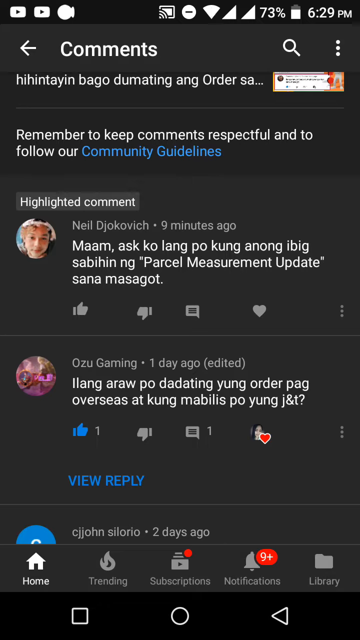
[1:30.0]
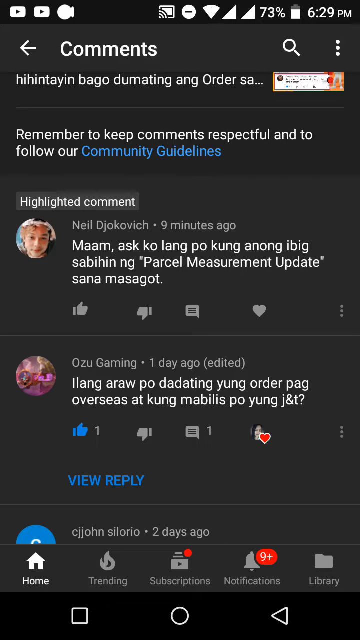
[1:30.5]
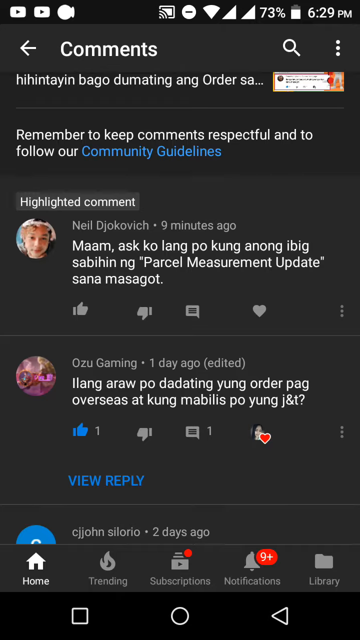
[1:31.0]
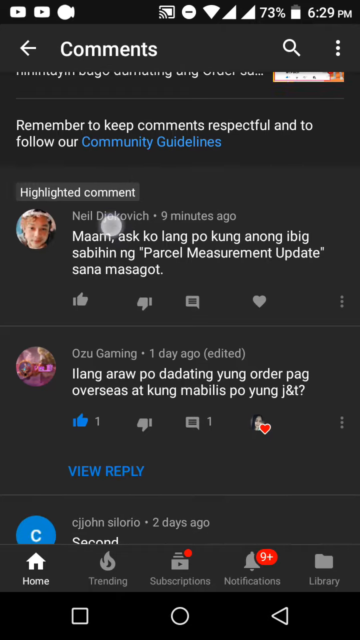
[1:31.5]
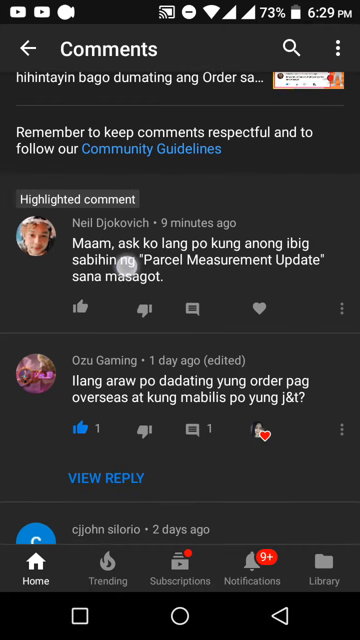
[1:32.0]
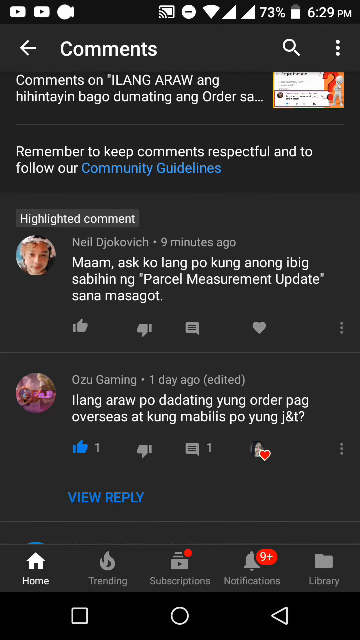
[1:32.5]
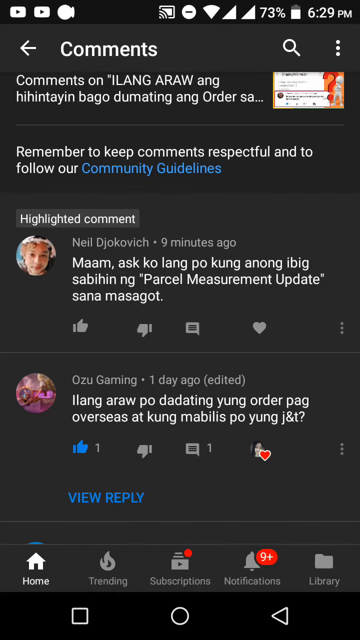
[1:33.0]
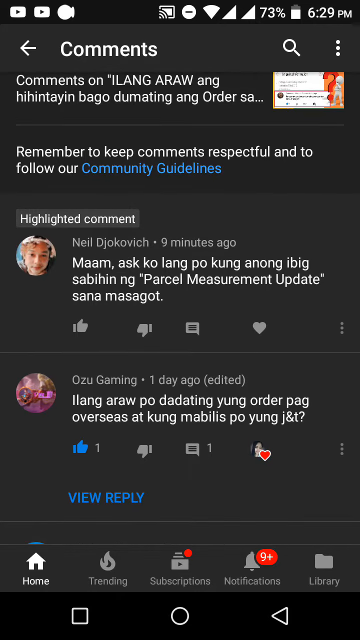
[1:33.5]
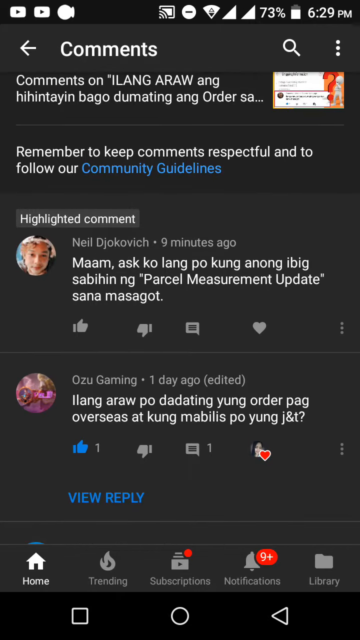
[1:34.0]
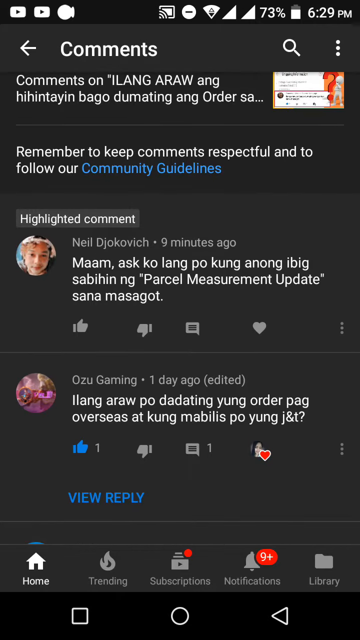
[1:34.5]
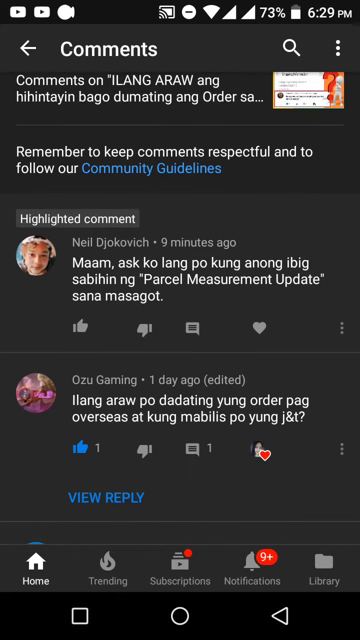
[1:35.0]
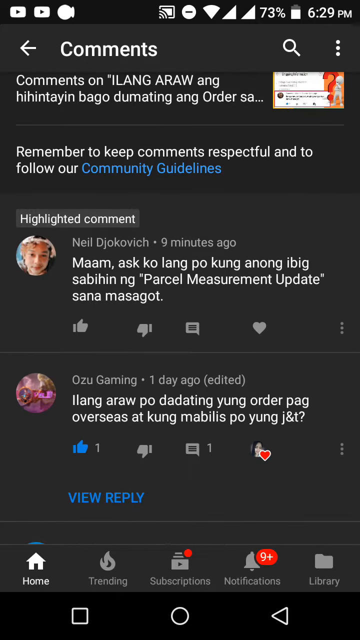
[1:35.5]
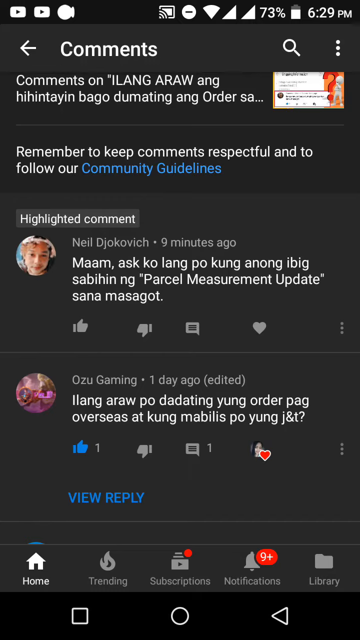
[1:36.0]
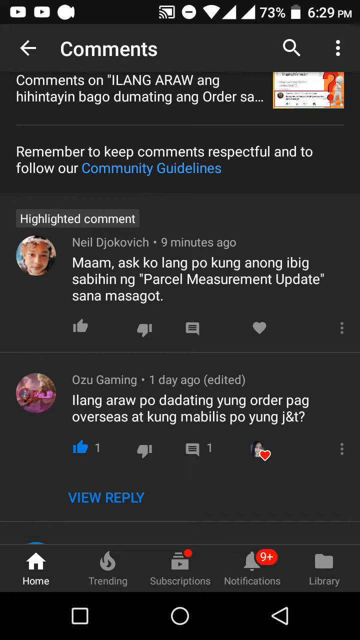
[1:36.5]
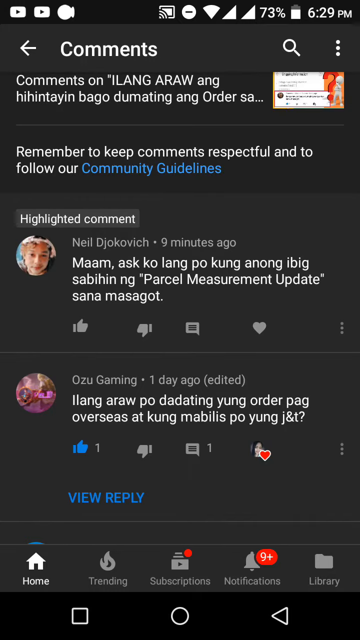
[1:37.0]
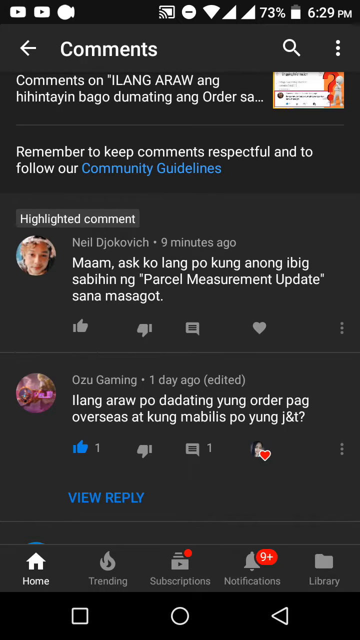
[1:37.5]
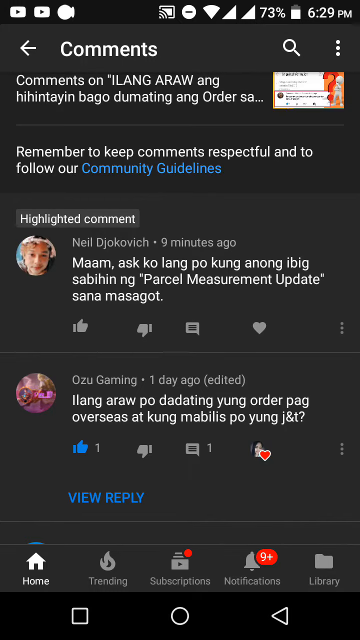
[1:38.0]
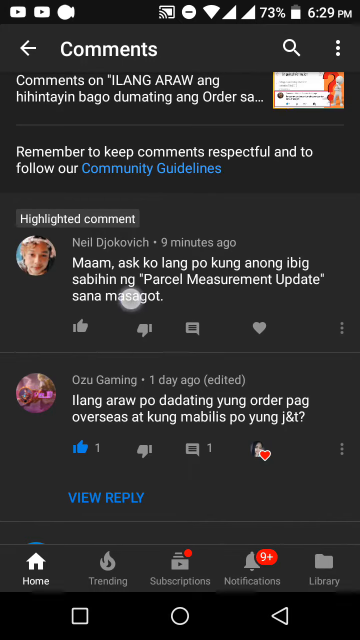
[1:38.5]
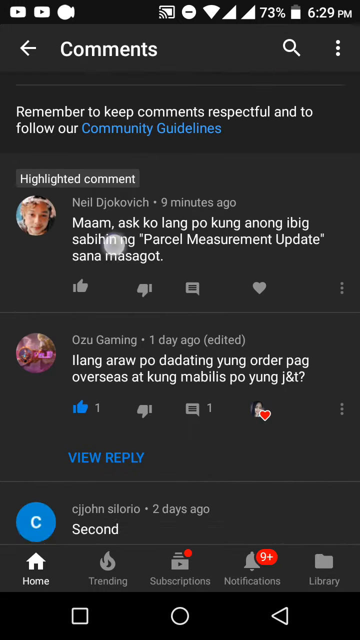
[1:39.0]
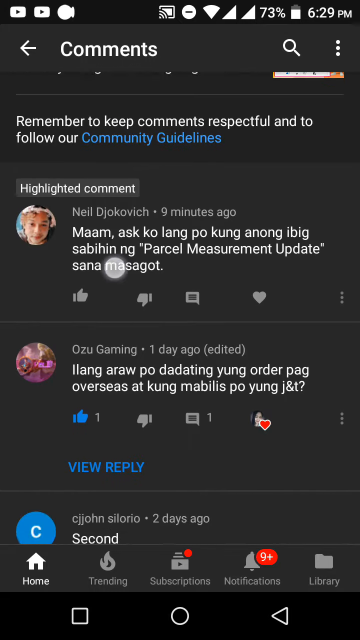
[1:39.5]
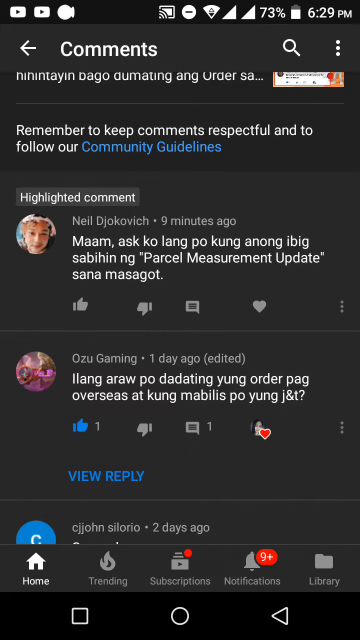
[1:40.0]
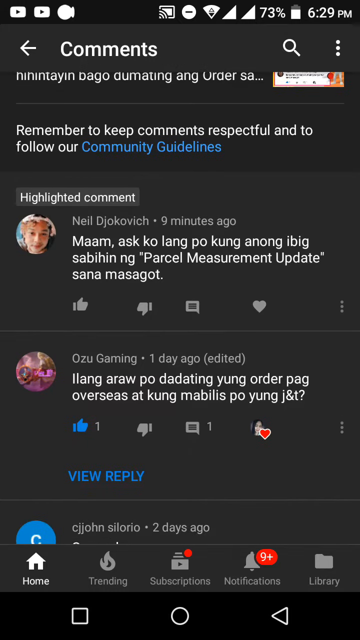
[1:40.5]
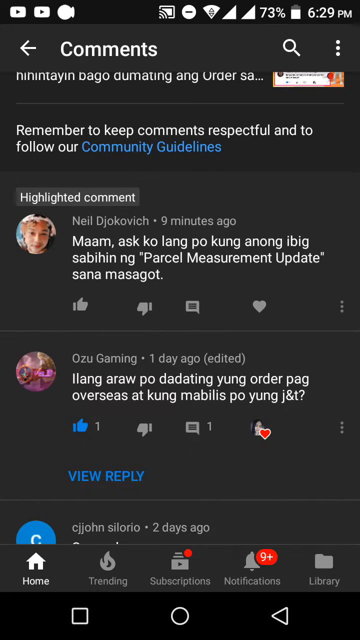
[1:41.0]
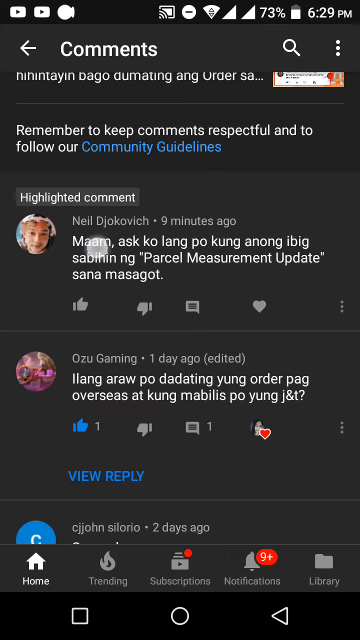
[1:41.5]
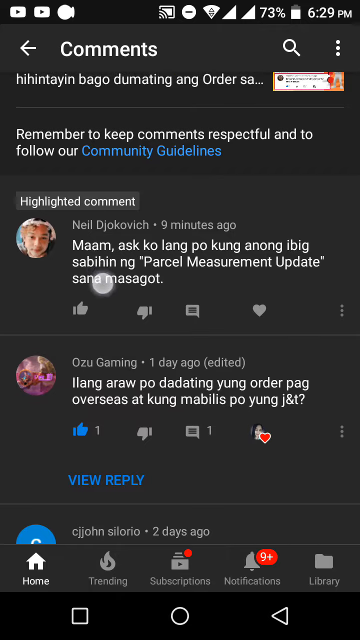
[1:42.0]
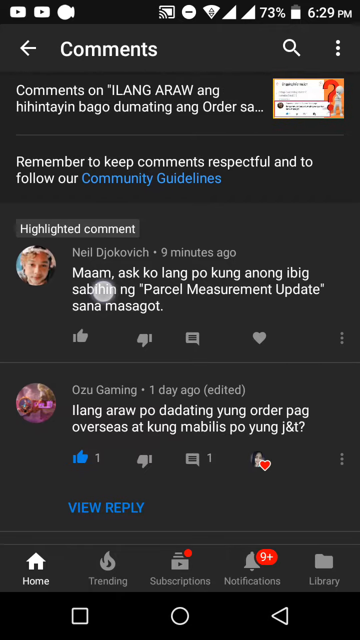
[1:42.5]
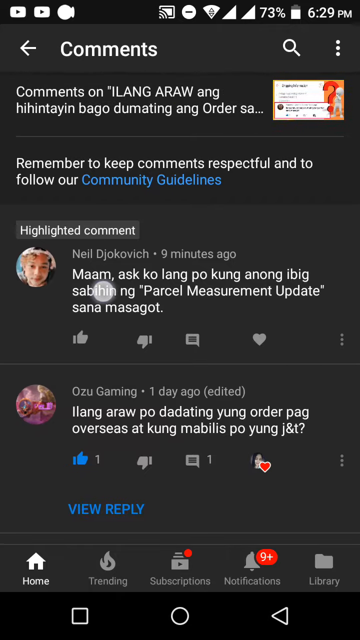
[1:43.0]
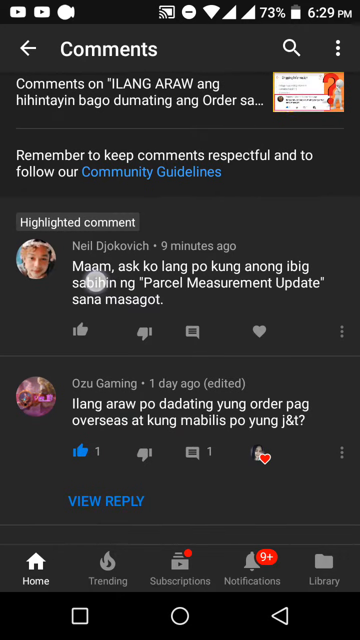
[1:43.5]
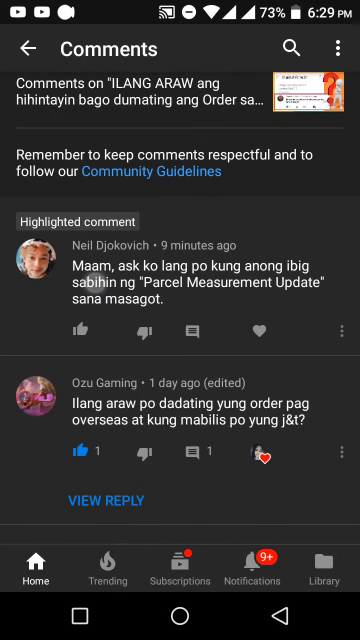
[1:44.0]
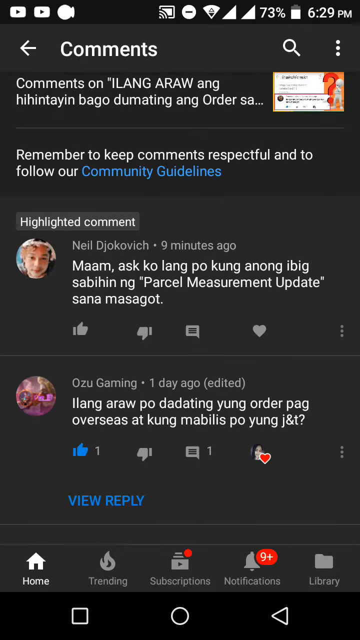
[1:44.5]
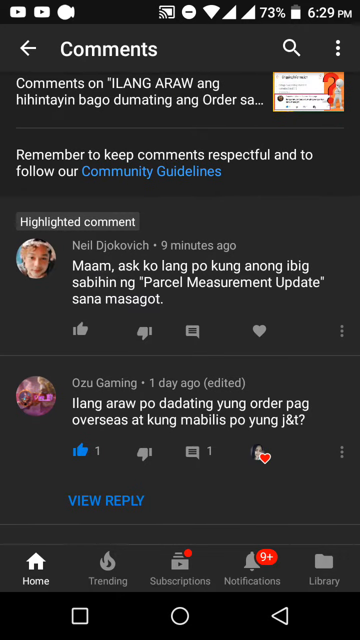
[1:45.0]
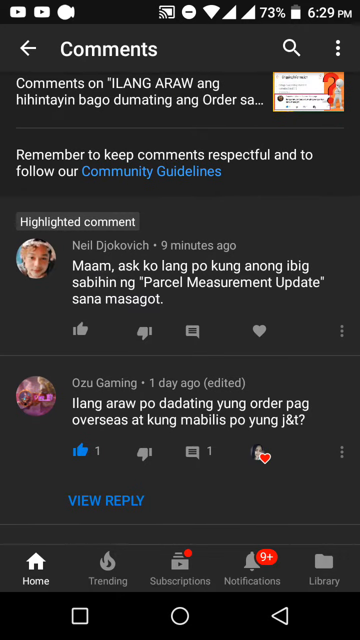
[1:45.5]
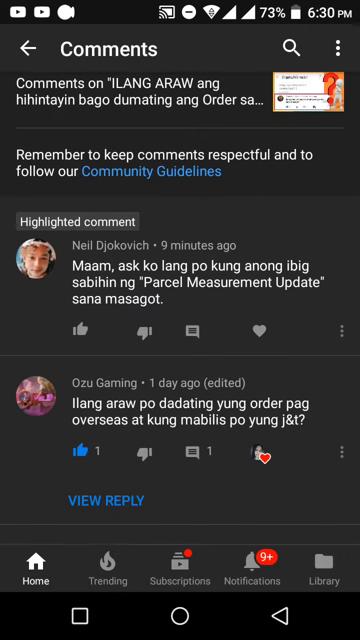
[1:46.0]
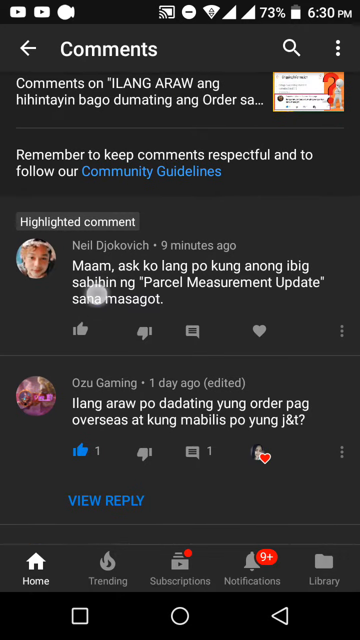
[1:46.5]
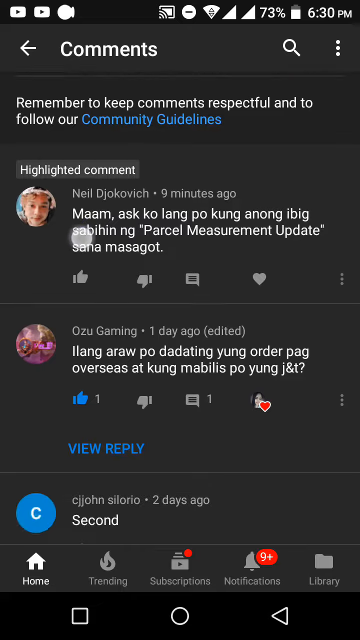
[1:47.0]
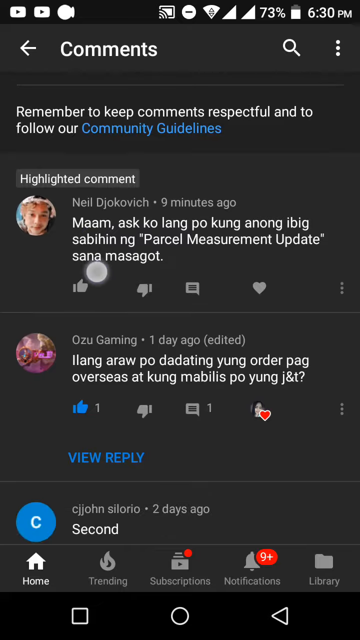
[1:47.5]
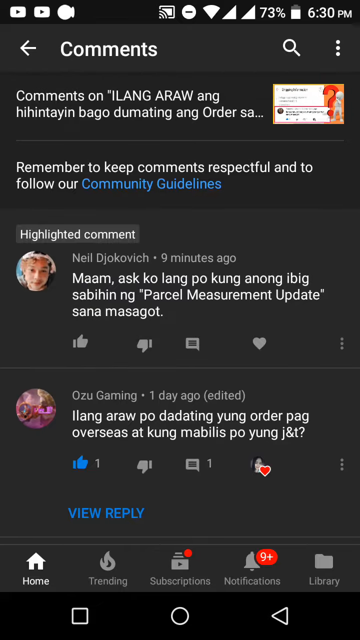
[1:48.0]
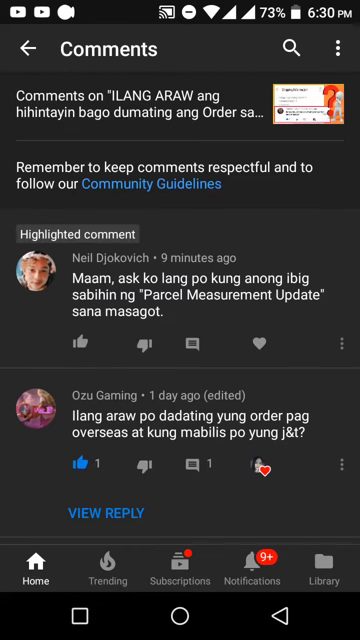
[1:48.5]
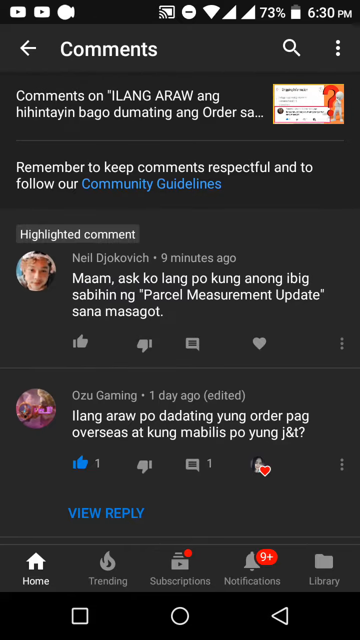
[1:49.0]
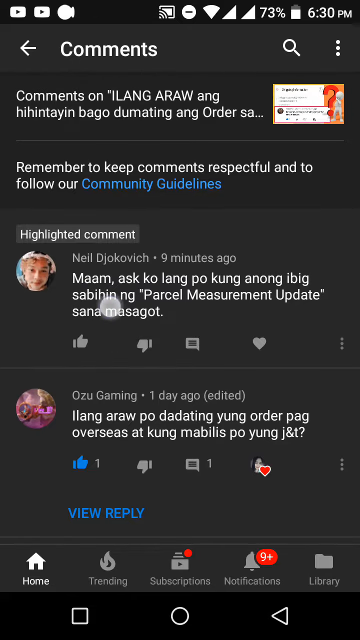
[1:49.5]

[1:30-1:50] The screen of a mobile device is shown. Across the top are status indicators: two YouTube icons at the upper left, and on the right the Wi-Fi icon, the battery life, the time, and three additional icons. Below that is a page header that says "comments" in large white text. The rest of the page shows two comments and instructions, all in white text except for a few words in blue. At the top is a highlighted comment by Neil Djokovic from nine minutes ago, written in a foreign language. Below it is another comment by Ozu Gaming from one day ago, edited, also in a foreign language. Below it, in blue, are the words "View Reply." The screen is dark gray. A round white mouse tracker tries to scroll the page up and then returns it to the normal position, attempting this action twice.